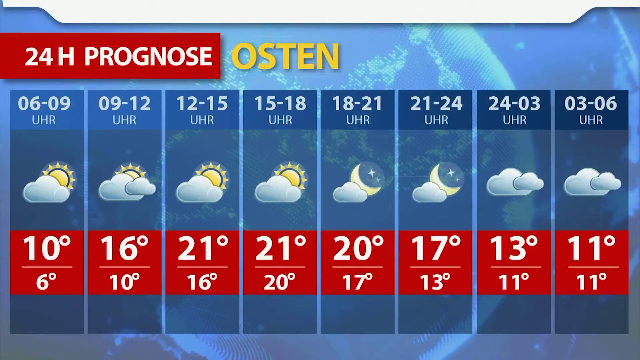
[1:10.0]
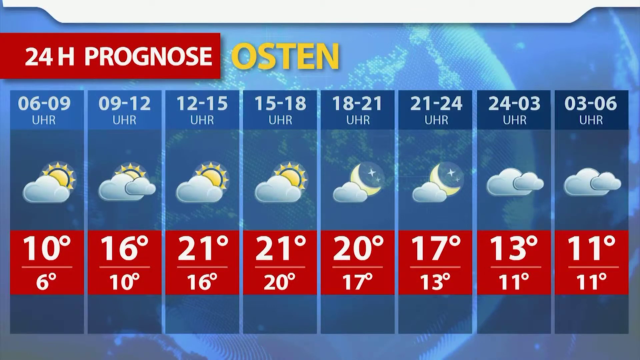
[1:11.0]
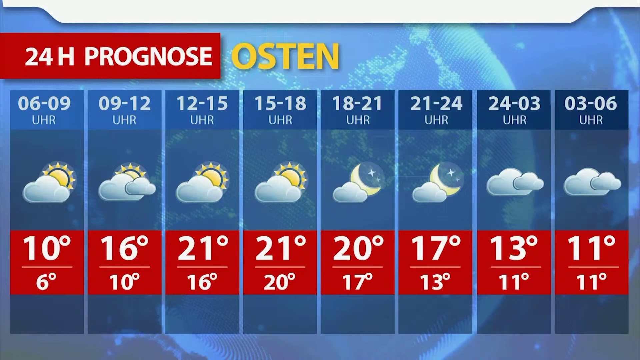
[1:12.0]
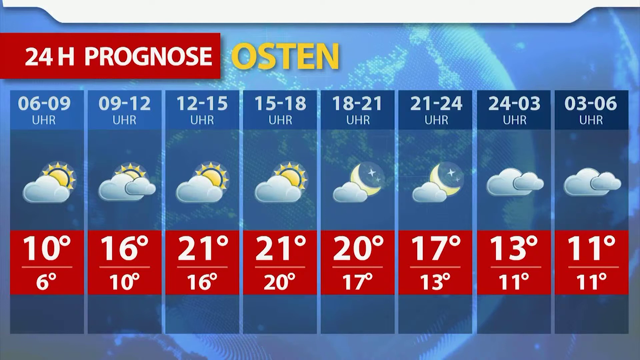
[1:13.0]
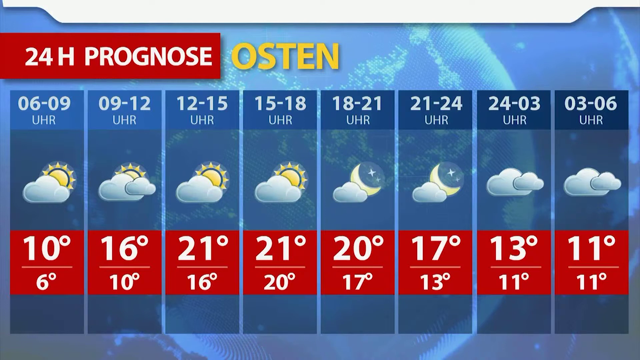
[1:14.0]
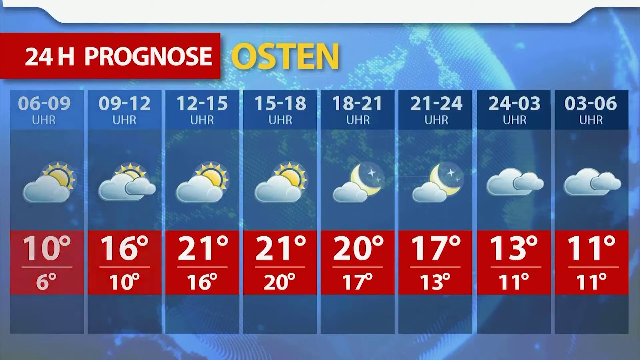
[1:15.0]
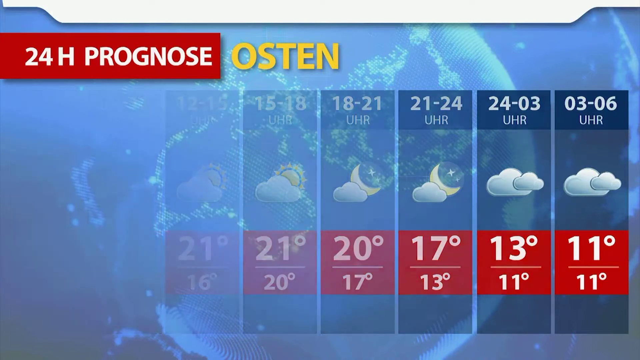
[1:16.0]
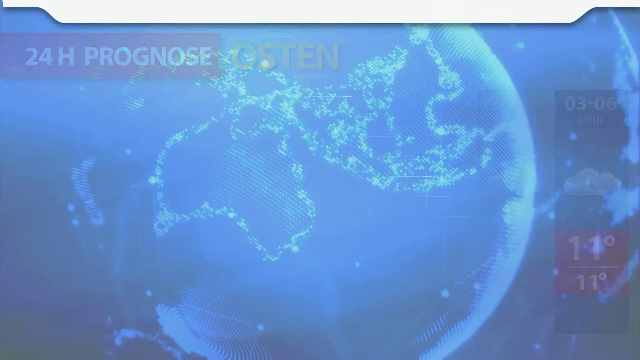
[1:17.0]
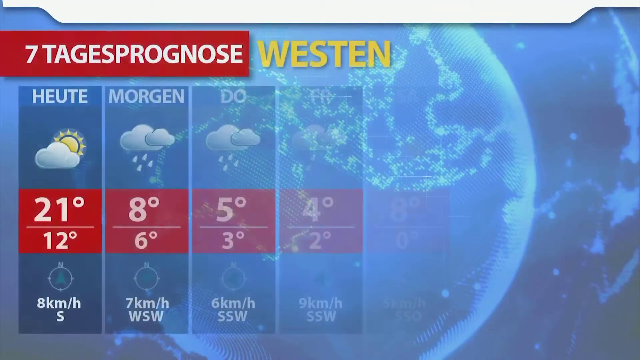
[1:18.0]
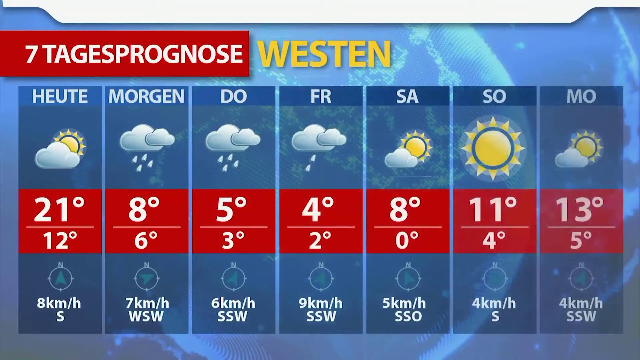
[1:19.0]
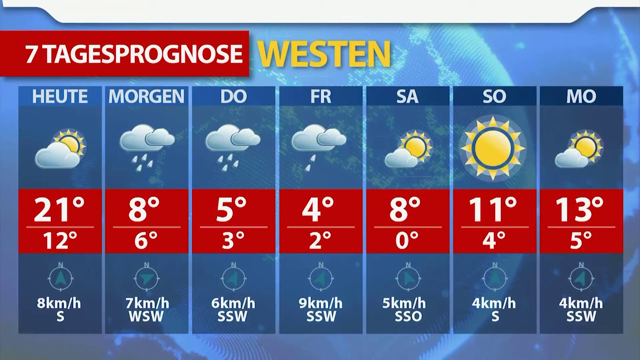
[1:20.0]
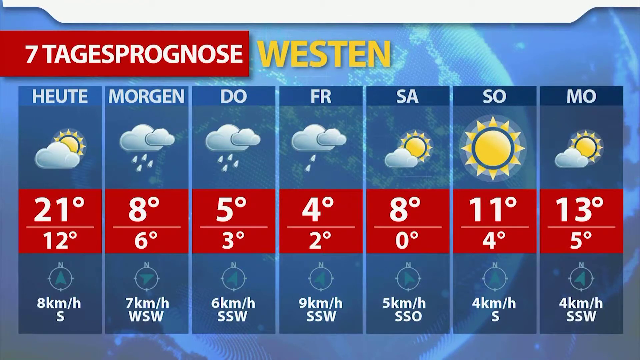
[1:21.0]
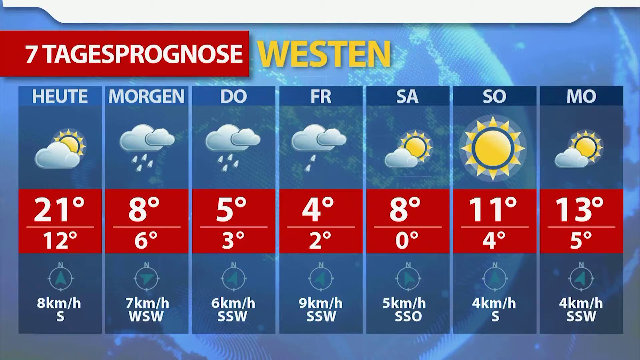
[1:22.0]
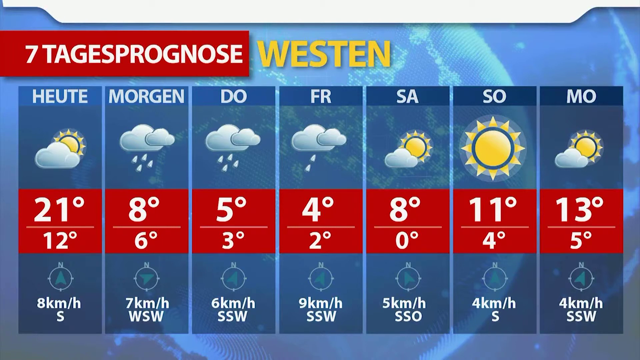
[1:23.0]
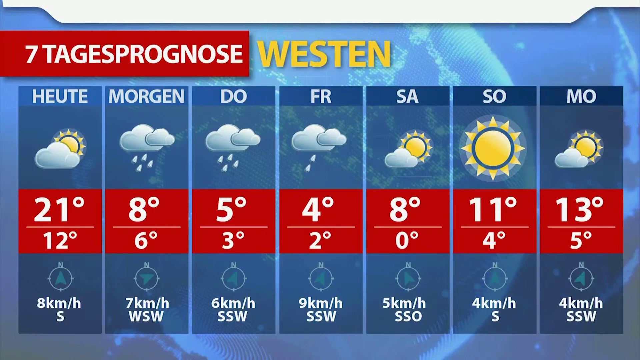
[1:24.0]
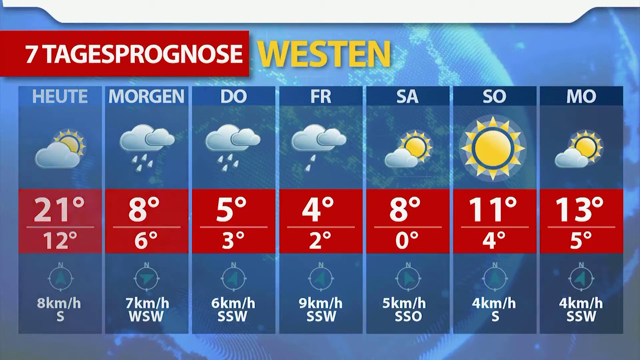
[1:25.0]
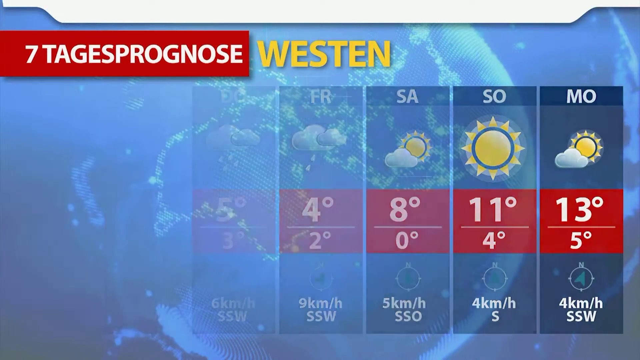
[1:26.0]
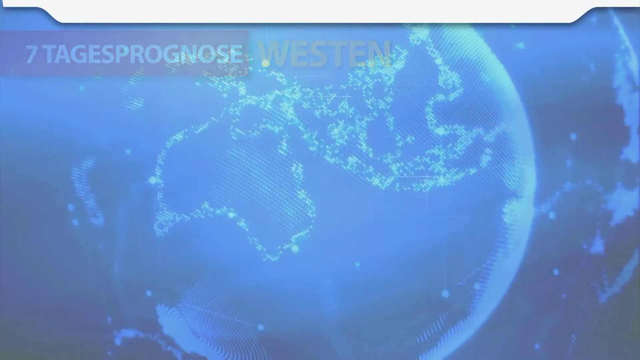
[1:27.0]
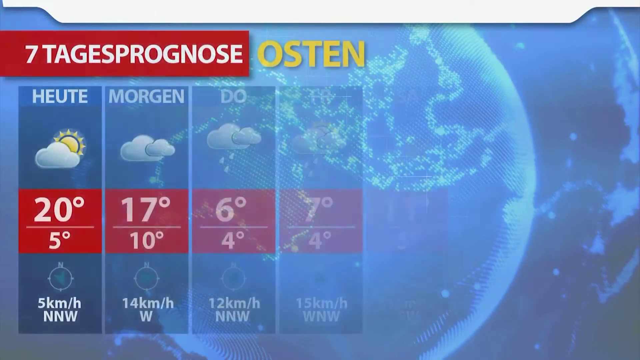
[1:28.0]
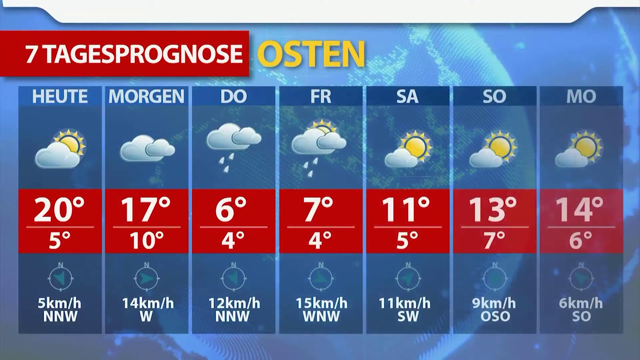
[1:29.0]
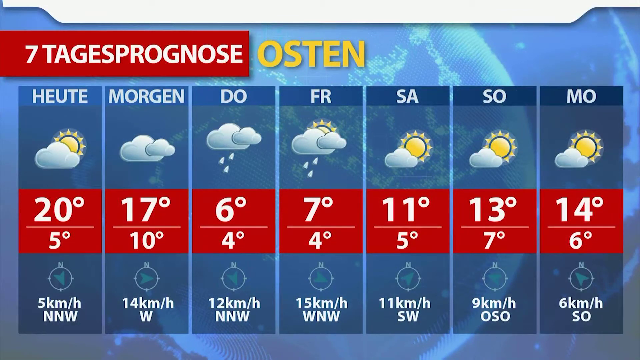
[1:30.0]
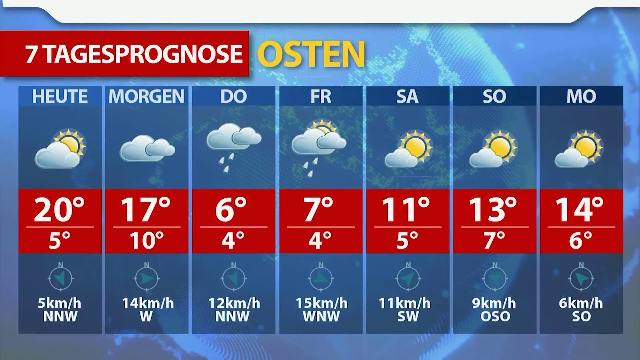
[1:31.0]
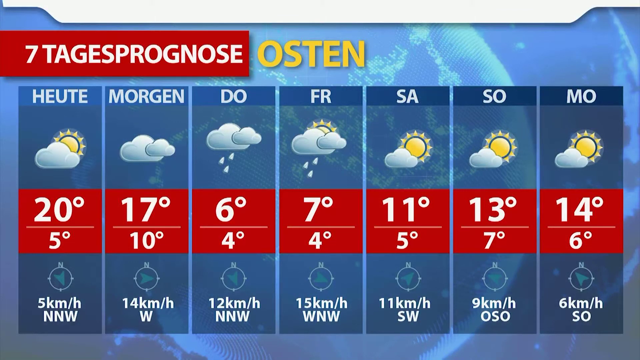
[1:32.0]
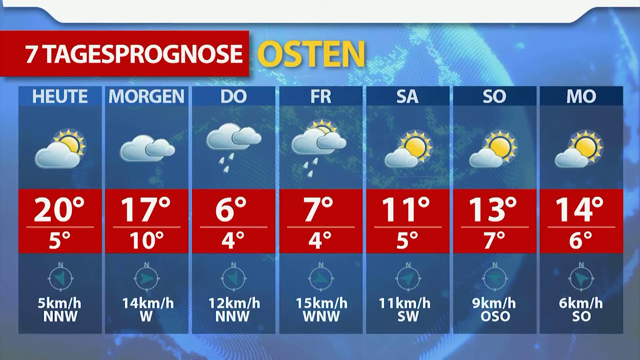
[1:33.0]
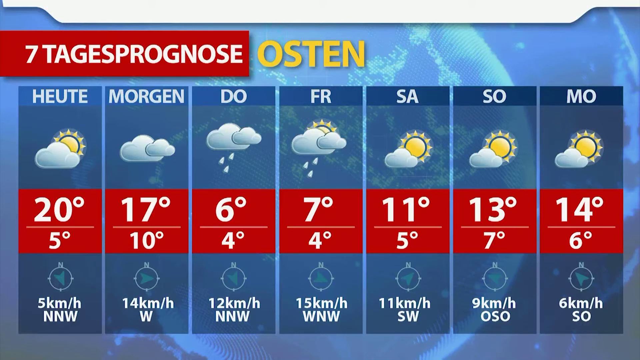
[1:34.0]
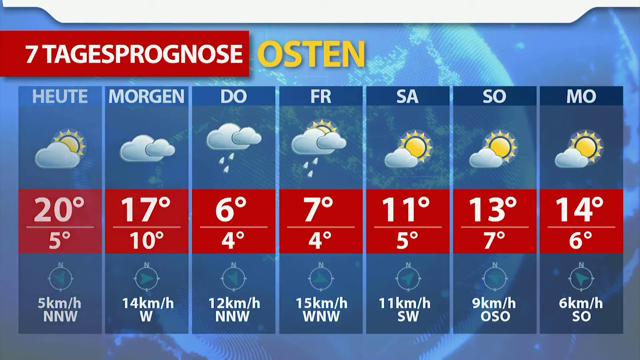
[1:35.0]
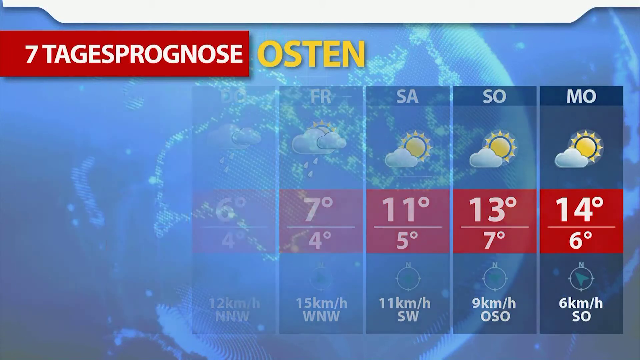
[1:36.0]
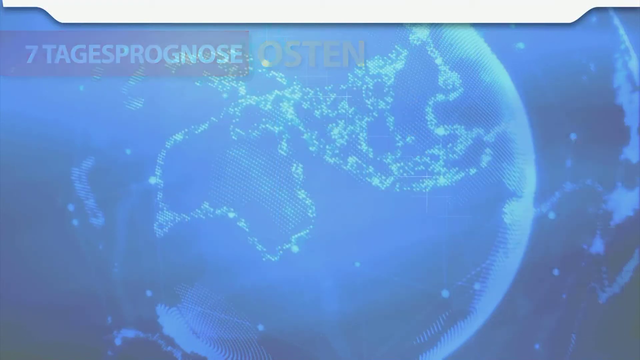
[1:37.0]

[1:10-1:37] The headline reads "24H Prognos Austin", with temperatures of 10, 16, 21, 21, 20, 17, 18 and 11 degrees. "UHR" is shown with different numbers. Icons include clouds with the sun, a cloud with the moon and stars, and a cloud alone with no sun, rain or moon. The forecast moves to West End and then back to Austin, showing different weather. The background is blue with a bubble of the world containing many countries and continents.